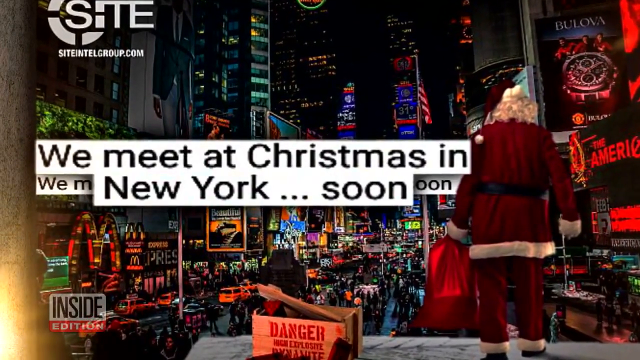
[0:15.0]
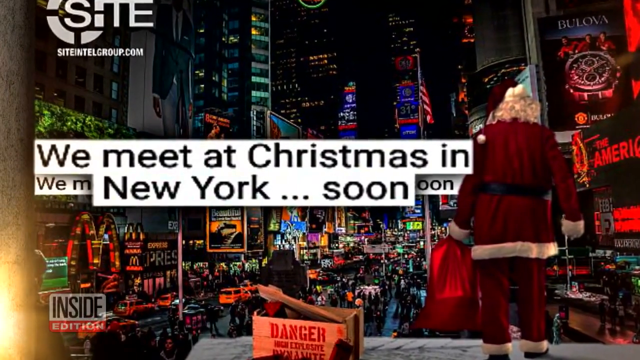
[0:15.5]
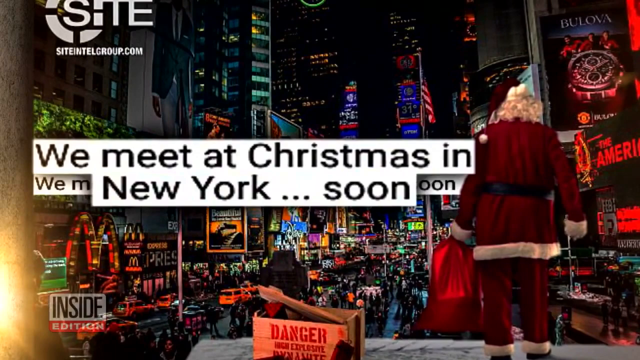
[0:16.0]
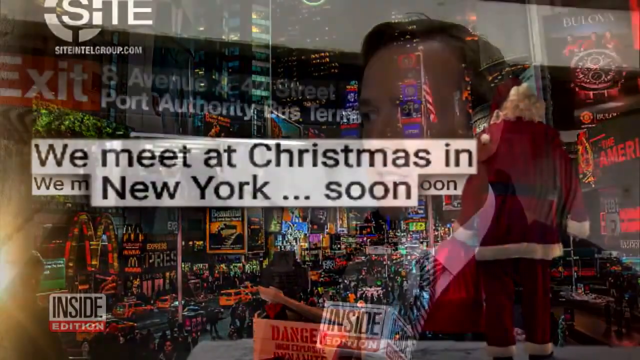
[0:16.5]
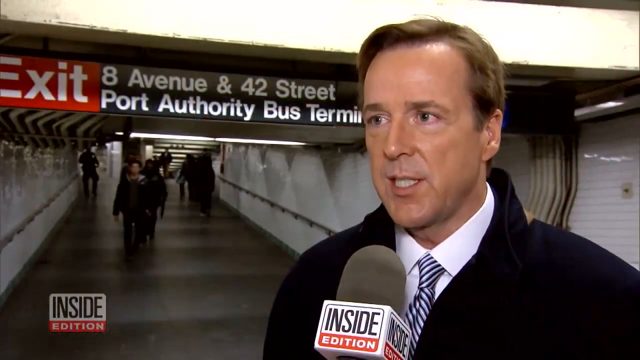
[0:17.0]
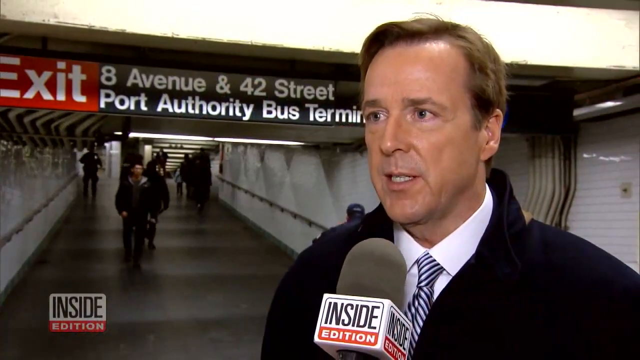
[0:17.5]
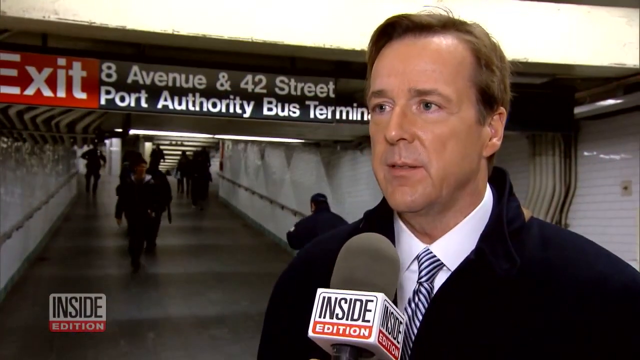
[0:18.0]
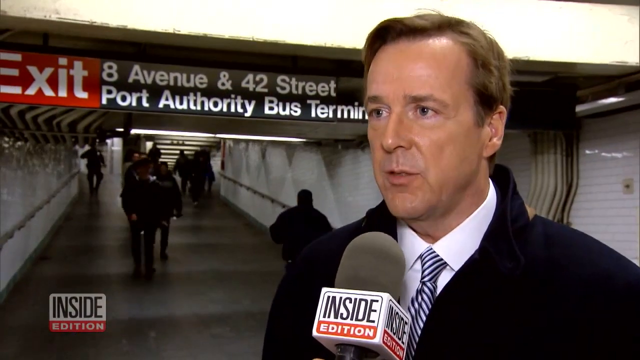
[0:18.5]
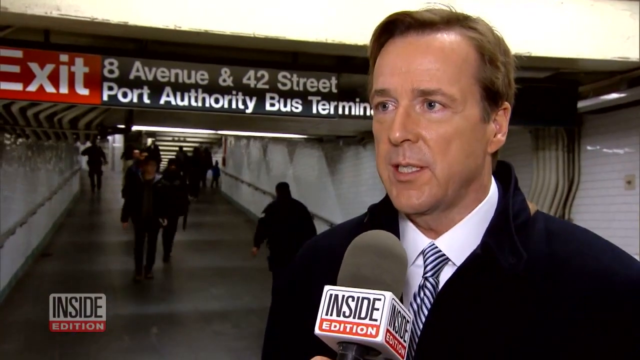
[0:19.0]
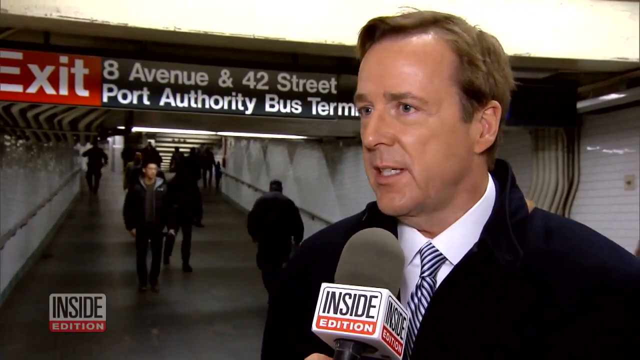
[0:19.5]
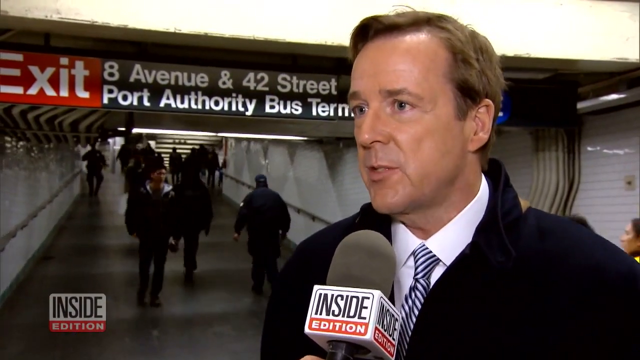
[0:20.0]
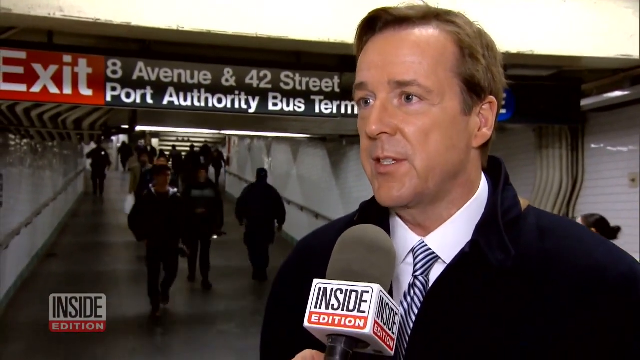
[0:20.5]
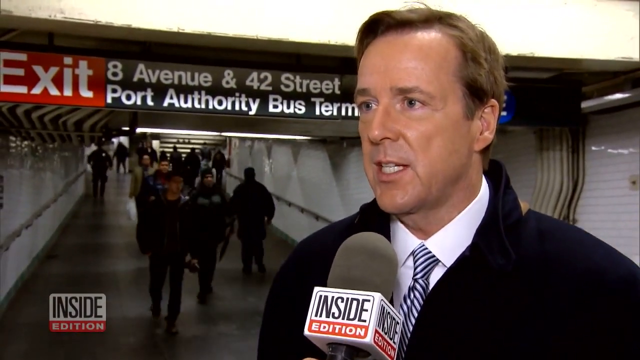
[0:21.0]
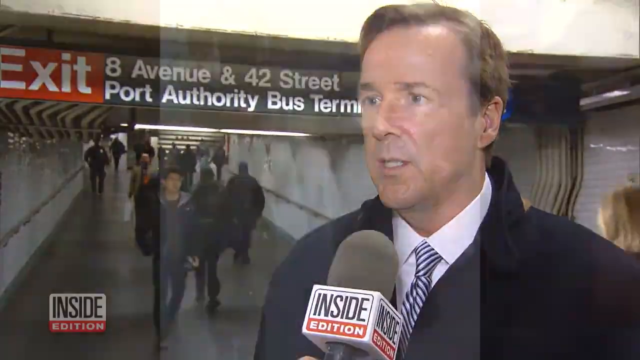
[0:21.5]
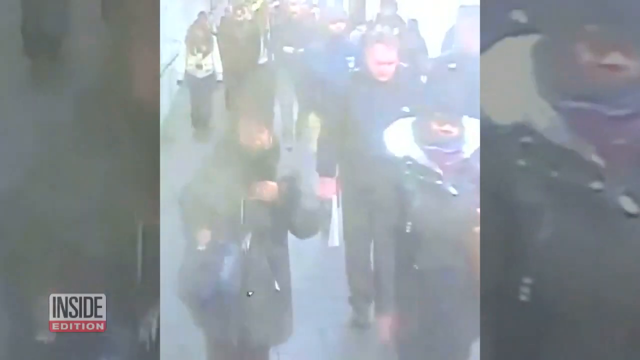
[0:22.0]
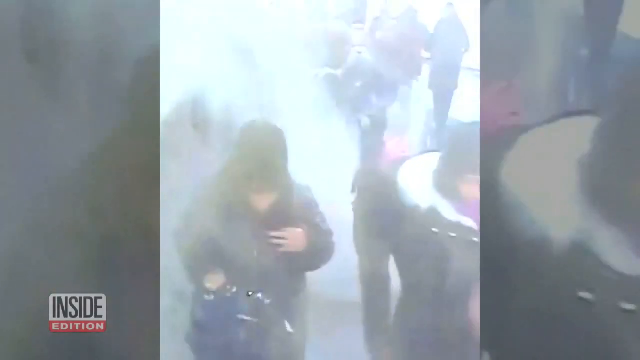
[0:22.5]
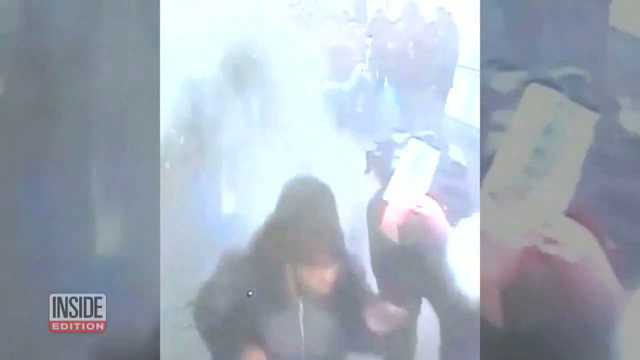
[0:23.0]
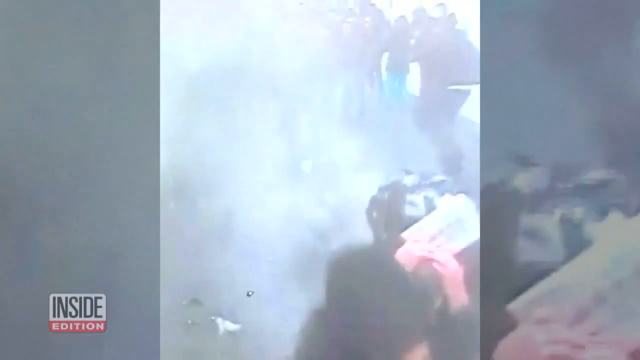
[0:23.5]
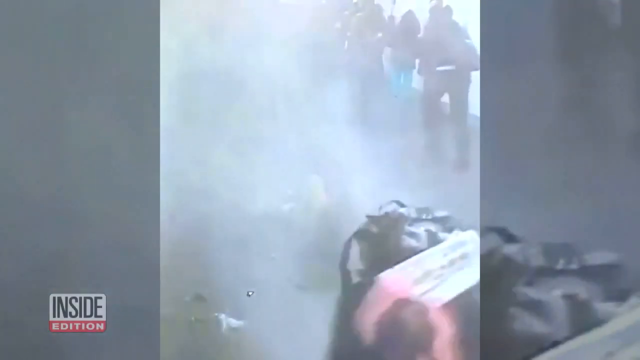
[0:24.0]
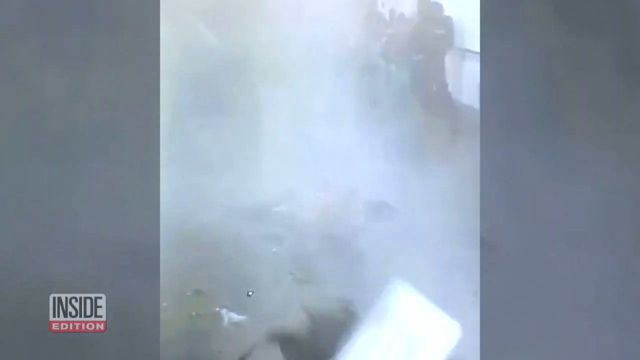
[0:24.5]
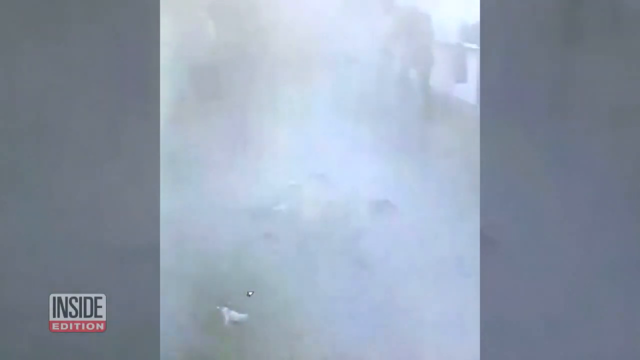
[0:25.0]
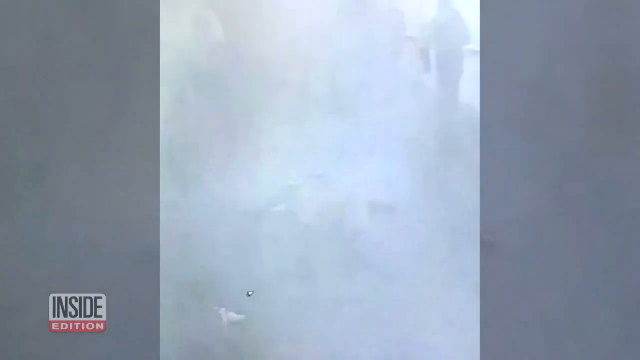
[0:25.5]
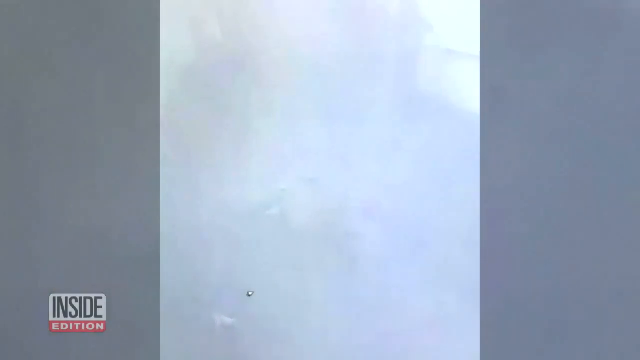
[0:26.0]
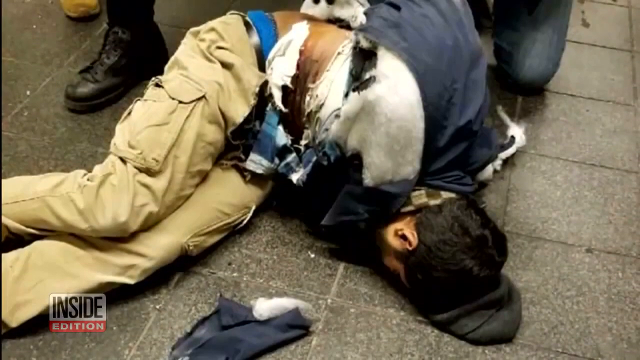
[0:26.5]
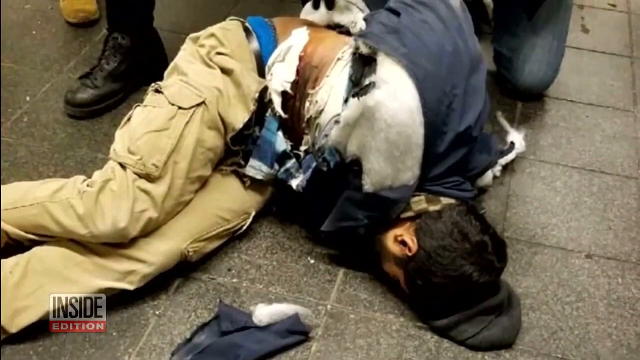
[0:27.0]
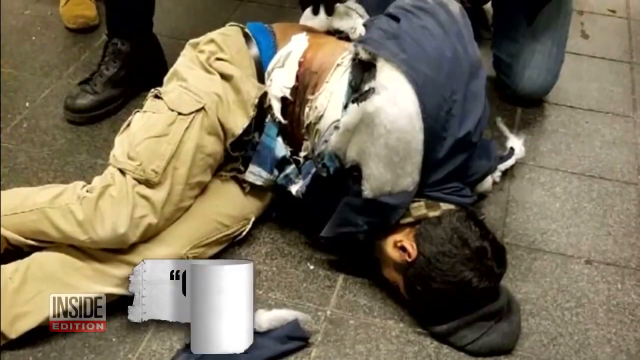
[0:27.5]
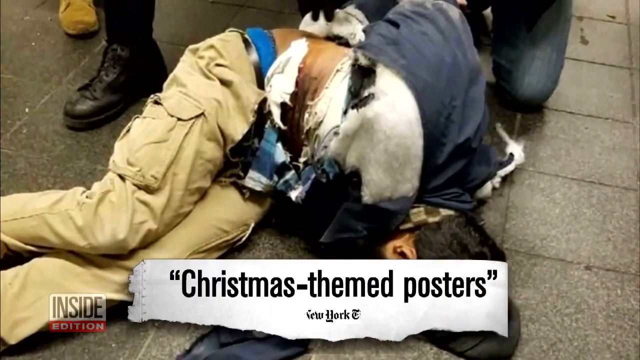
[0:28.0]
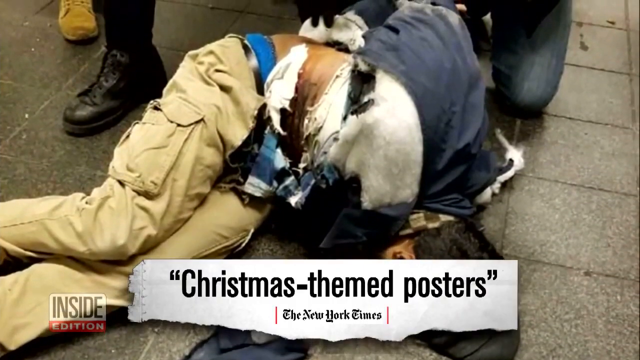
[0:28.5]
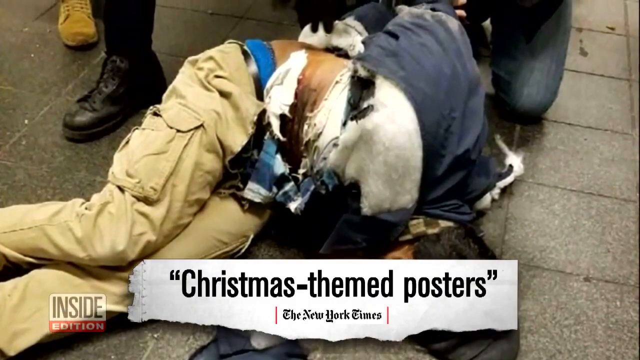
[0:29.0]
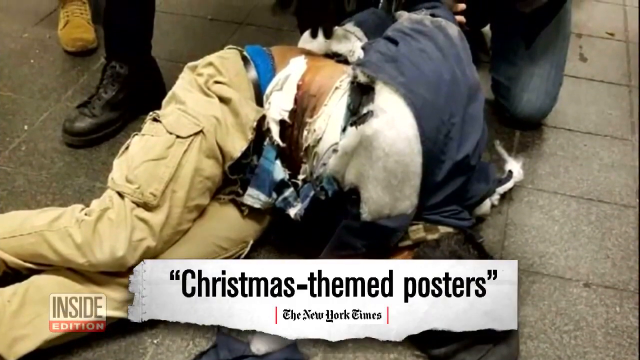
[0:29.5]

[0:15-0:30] A man in a suit and a black coat has a microphone in front of his face that says Inside Edition; he appears to be being interviewed and seems perhaps to be someone who works for the city or is officially authorized to speak. He is at the exit for 8th Avenue and 42nd Street, Port Authority Bus Terminal. Next, a crowd of people is shown, perhaps on CCTV footage, walking maybe inside the terminal on a tile floor, when an explosion happens: there is no fire, but smoke and dust blow up all around the people walking. Then what is probably the suspect is shown lying on the floor, apparently taken down, perhaps by the police. He wears tan pants and a dark blue long-sleeve shirt that looks partially ripped off of him. His arms appear to be behind his back, probably in handcuffs. He has dark short hair, and his head is turned away from the camera so his face cannot be seen.